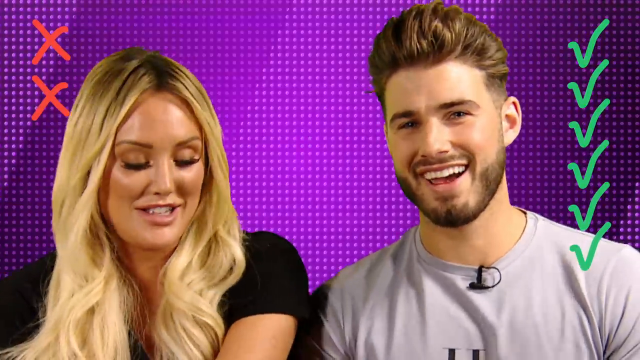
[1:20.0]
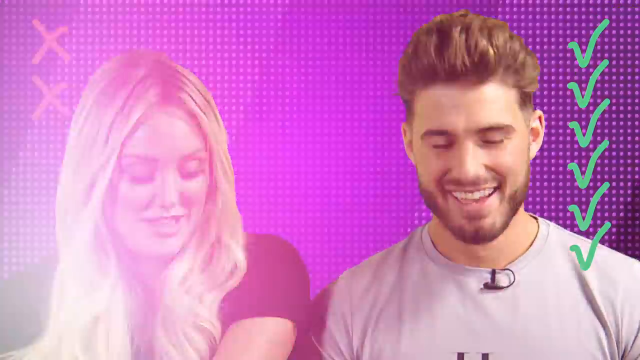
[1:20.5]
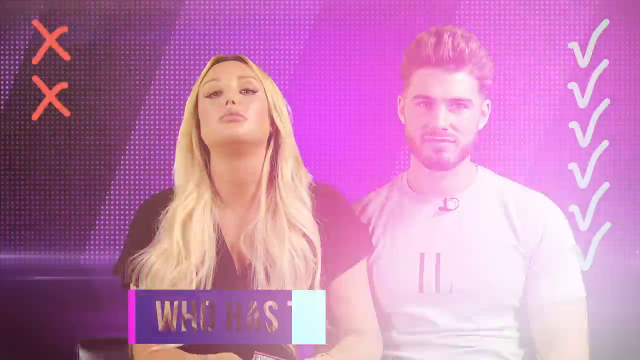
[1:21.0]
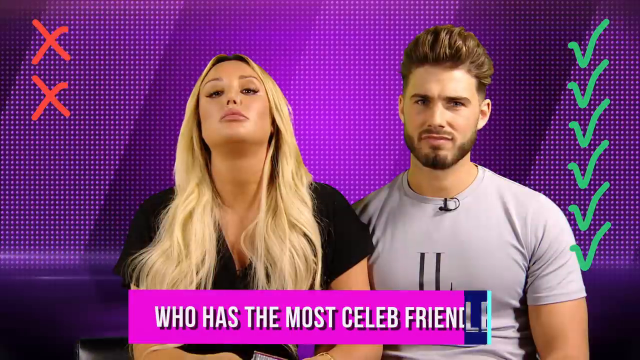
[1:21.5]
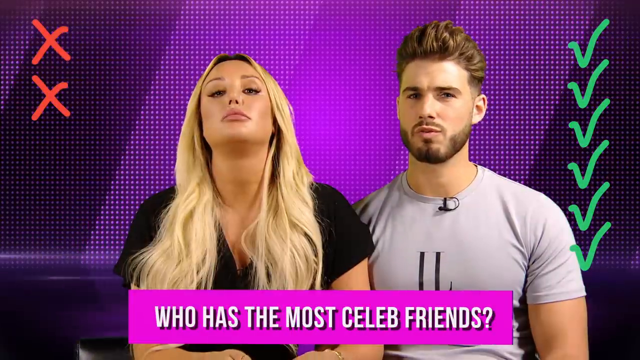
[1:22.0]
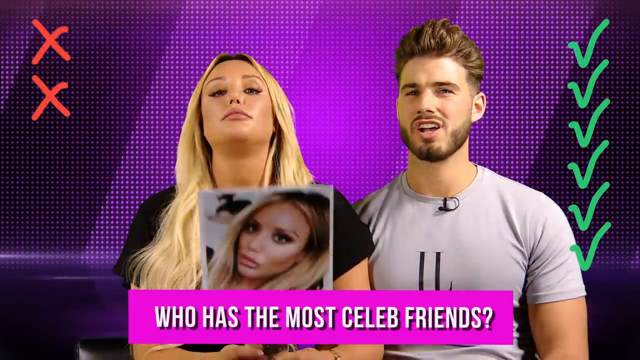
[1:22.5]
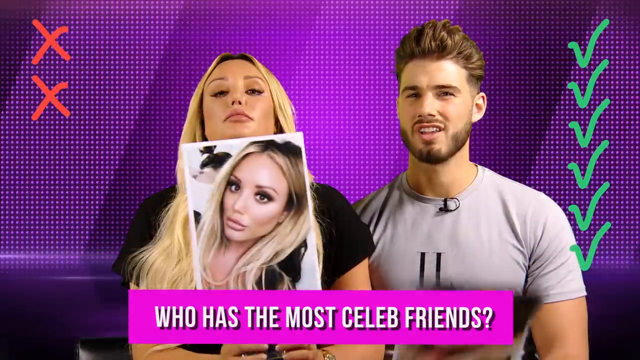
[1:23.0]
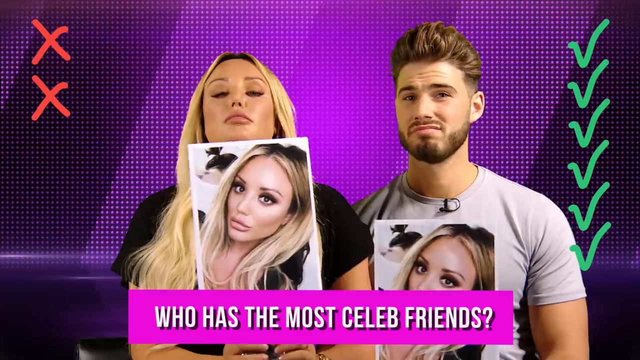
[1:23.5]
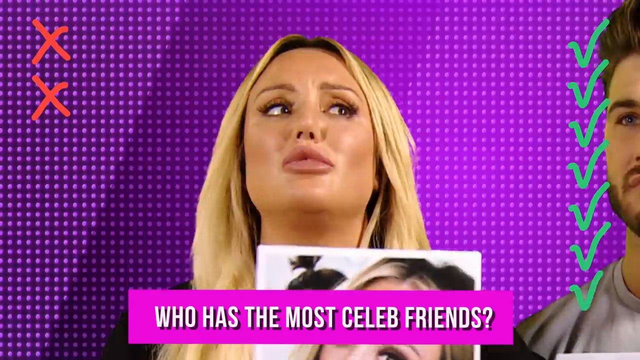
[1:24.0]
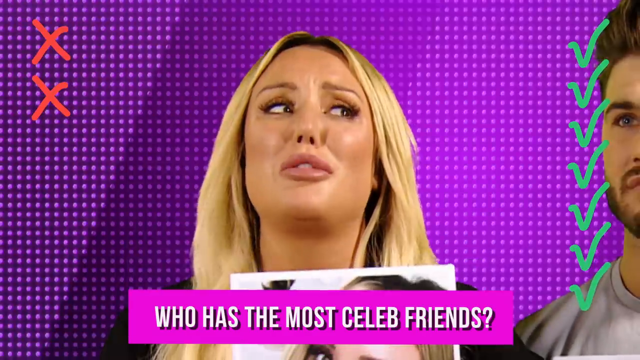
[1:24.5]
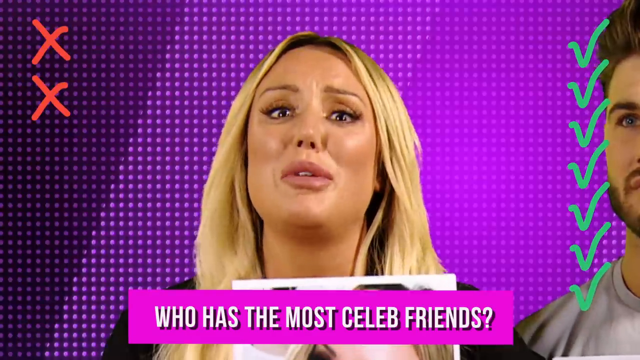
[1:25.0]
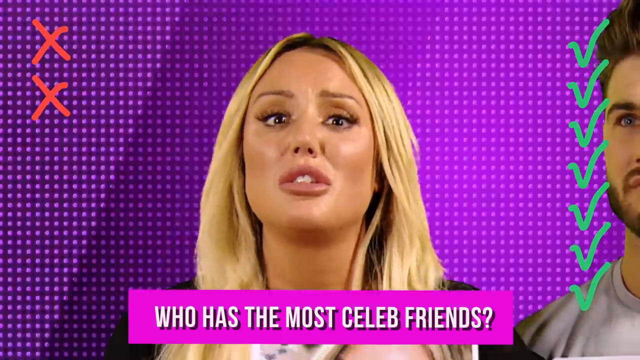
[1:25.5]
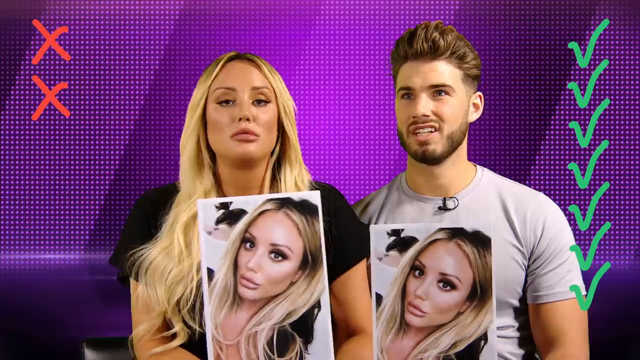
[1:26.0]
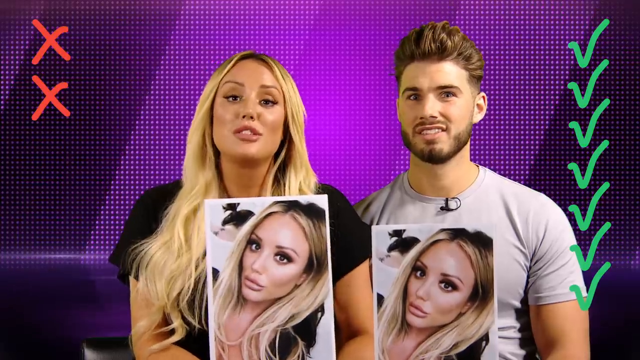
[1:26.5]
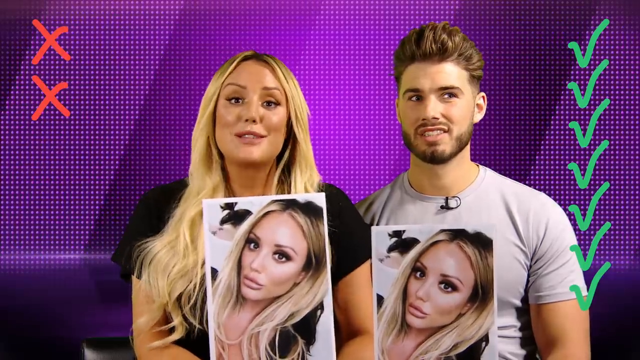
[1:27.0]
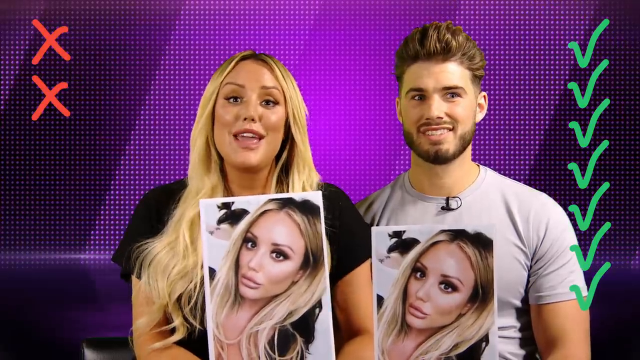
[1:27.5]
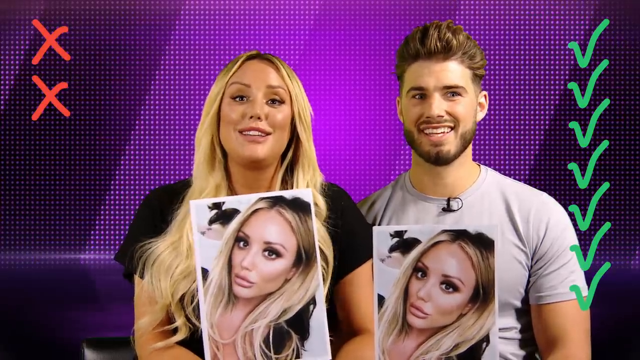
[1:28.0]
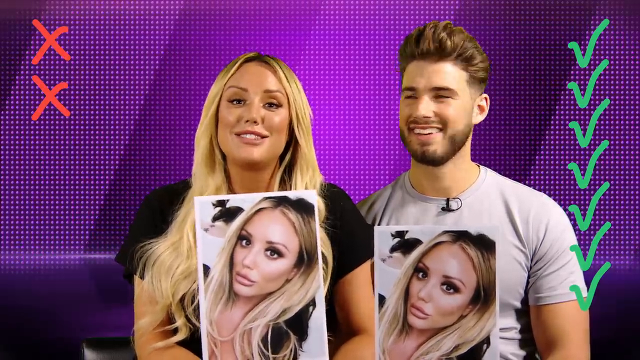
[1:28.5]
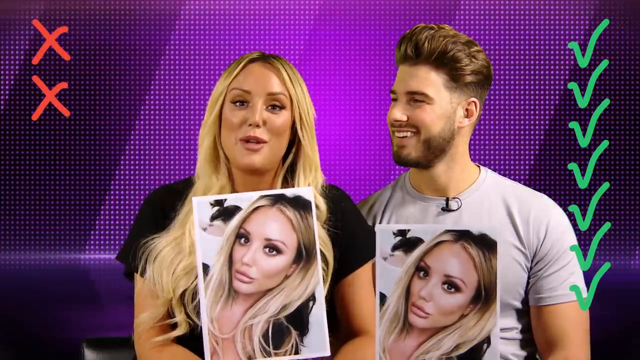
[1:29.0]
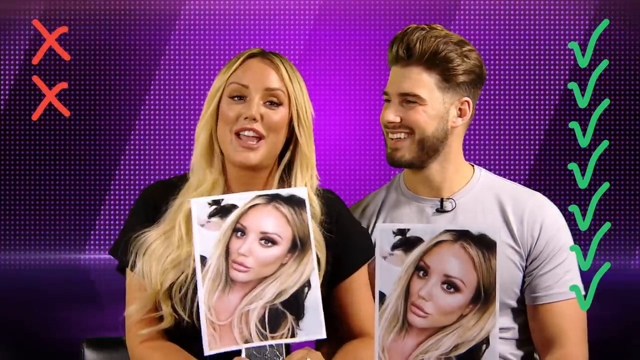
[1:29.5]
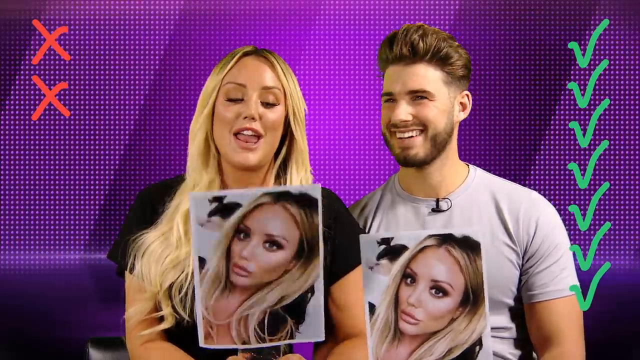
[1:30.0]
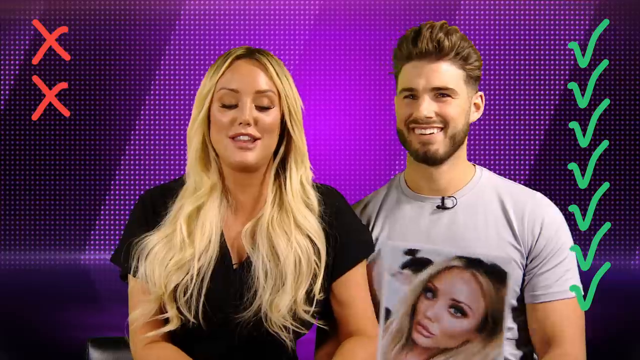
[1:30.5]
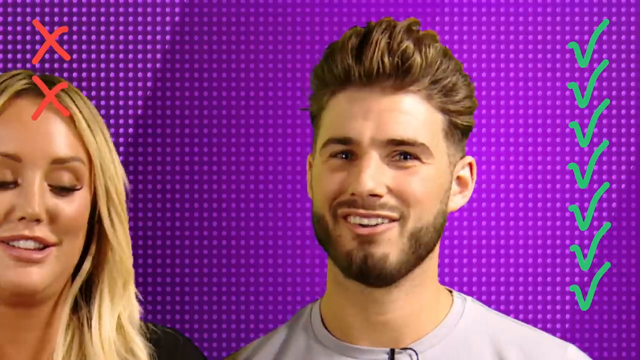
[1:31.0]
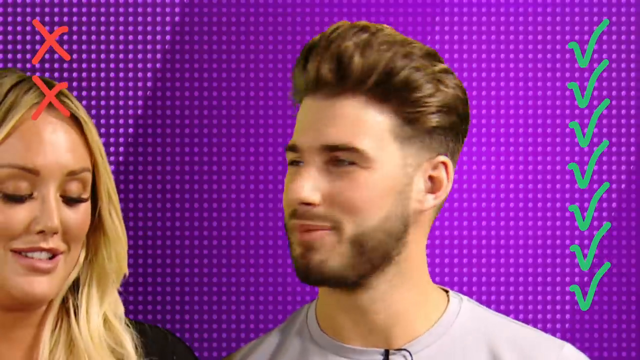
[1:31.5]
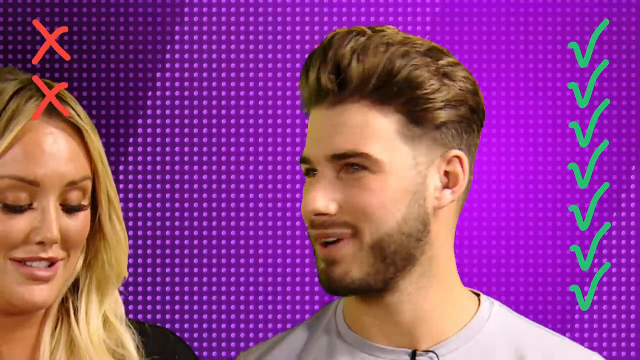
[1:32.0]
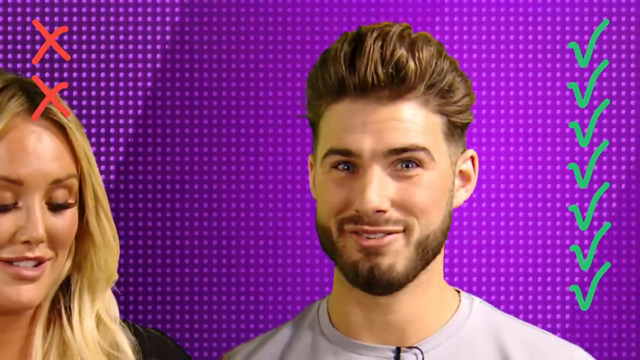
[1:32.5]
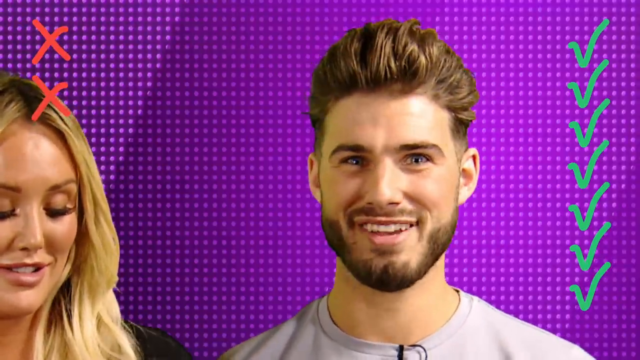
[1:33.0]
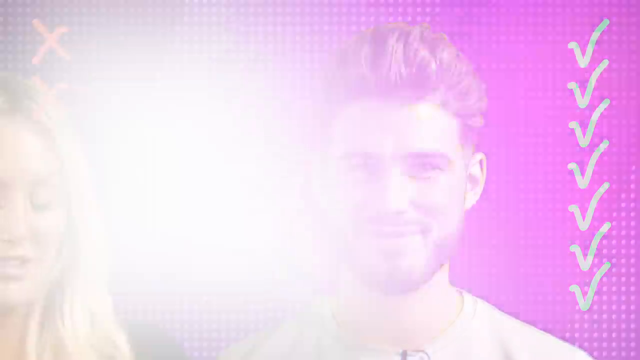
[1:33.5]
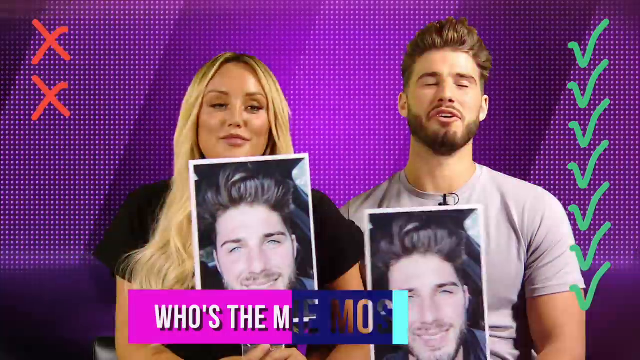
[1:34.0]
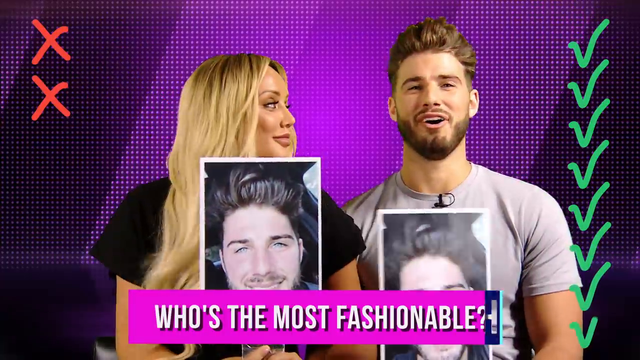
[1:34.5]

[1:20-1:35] The question "who has the most celeb friends?" appears, and they both hold up a picture of her, Charlotte. She seems to discuss the topic at length, then he takes a moment and starts discussing it too. This brings their total of correct answers to seven. The next question is "who's the most fashionable?" and they both hold up a picture of him, after which she looks at him and makes a statement.